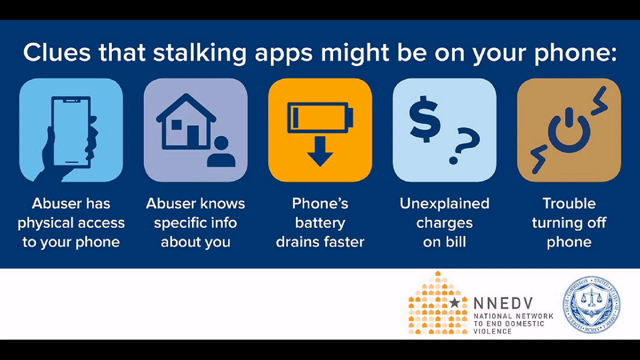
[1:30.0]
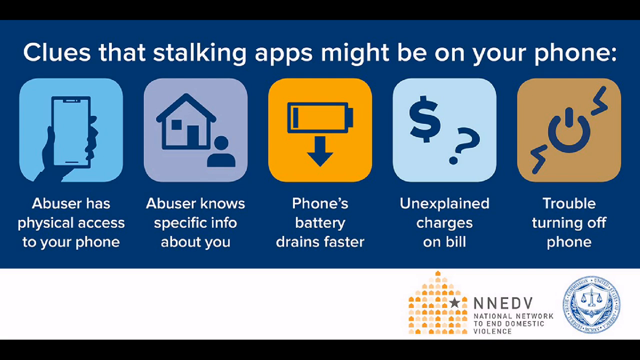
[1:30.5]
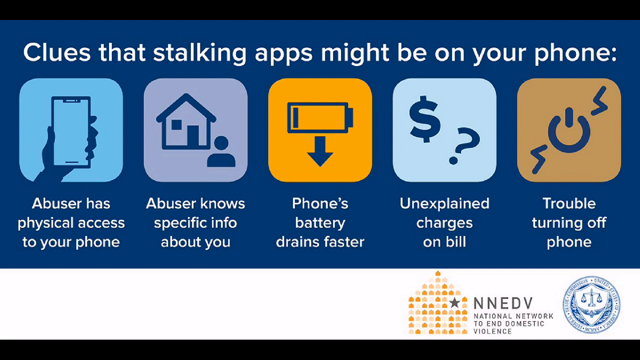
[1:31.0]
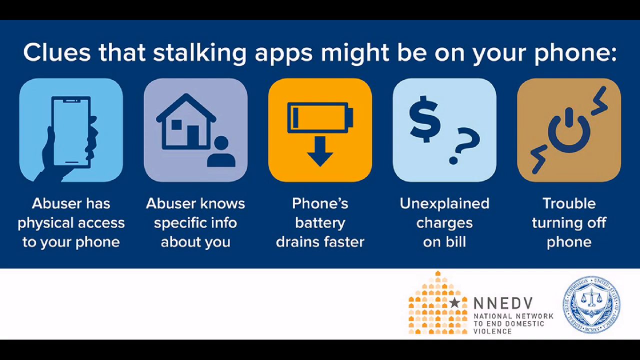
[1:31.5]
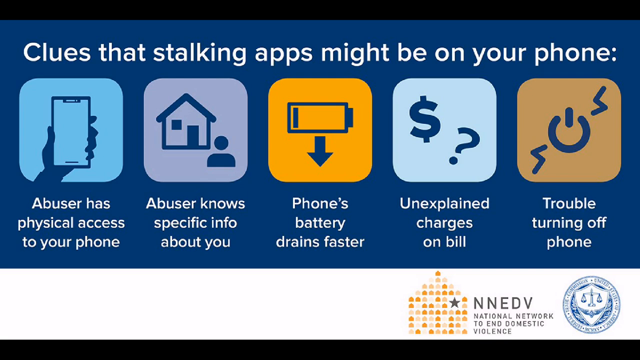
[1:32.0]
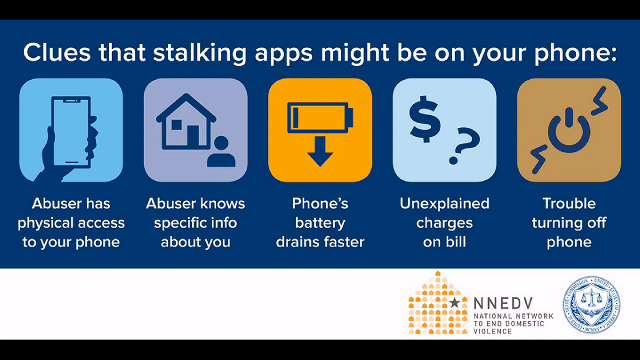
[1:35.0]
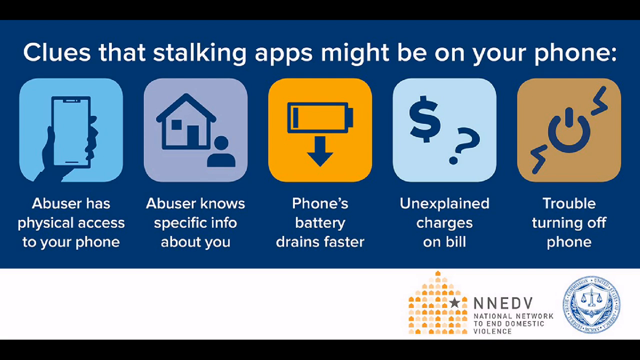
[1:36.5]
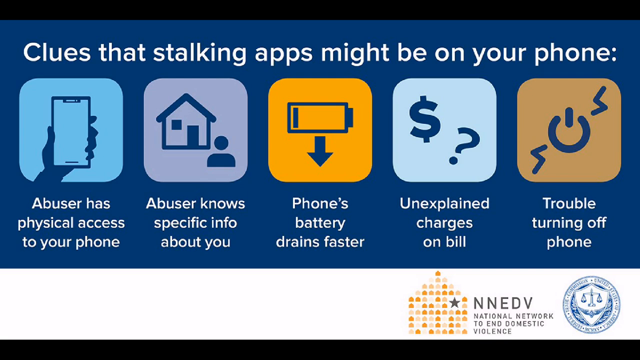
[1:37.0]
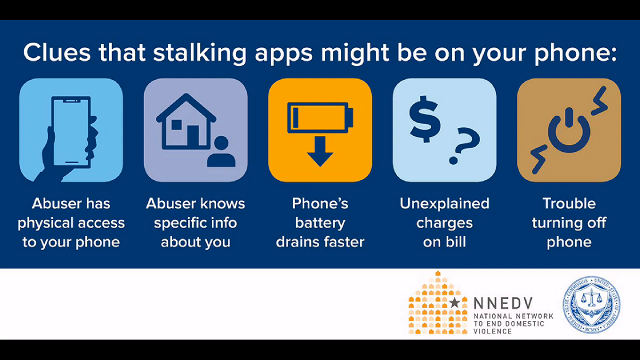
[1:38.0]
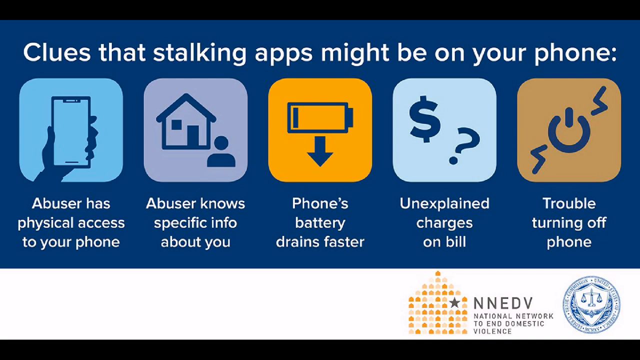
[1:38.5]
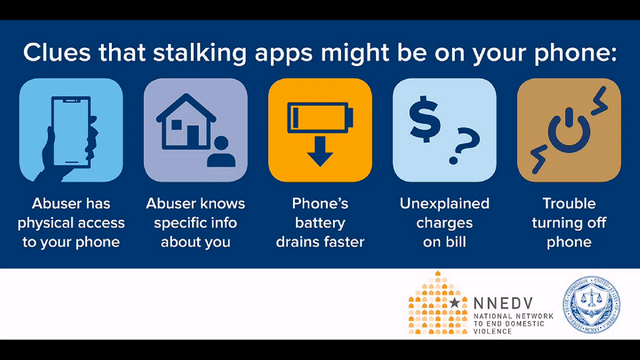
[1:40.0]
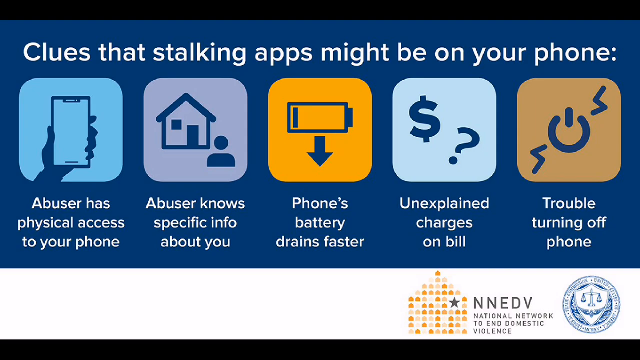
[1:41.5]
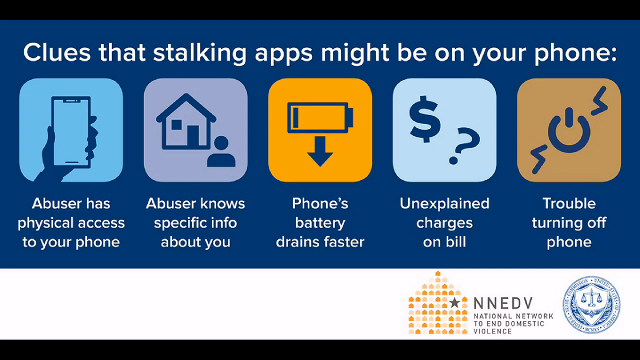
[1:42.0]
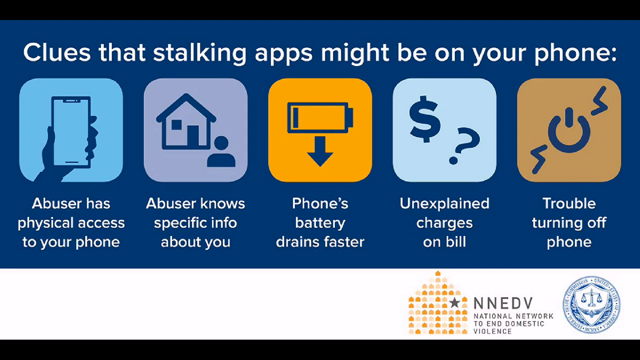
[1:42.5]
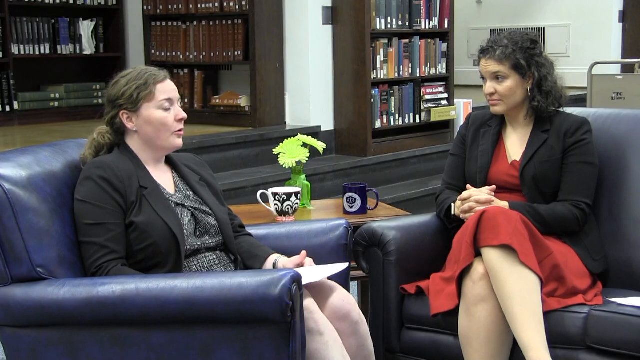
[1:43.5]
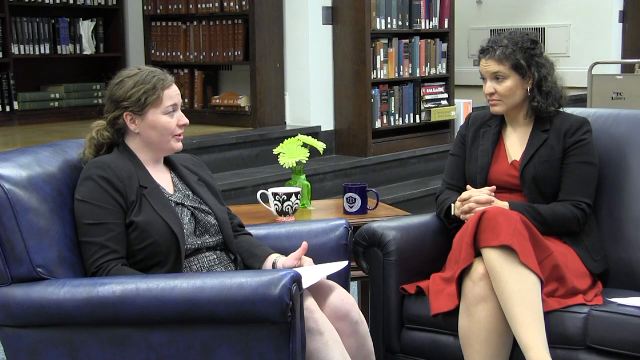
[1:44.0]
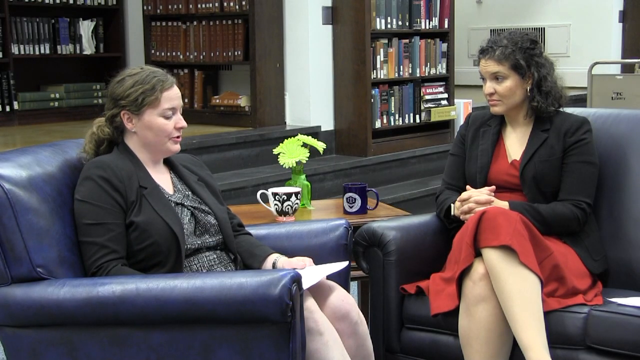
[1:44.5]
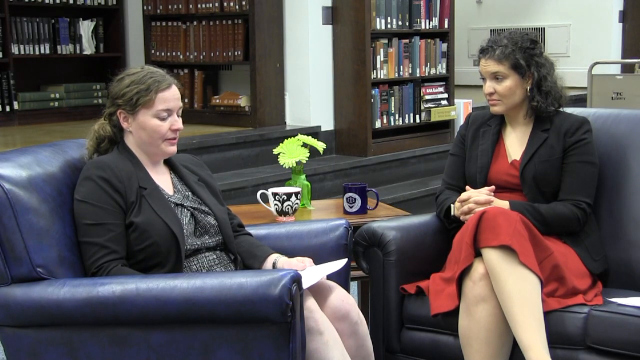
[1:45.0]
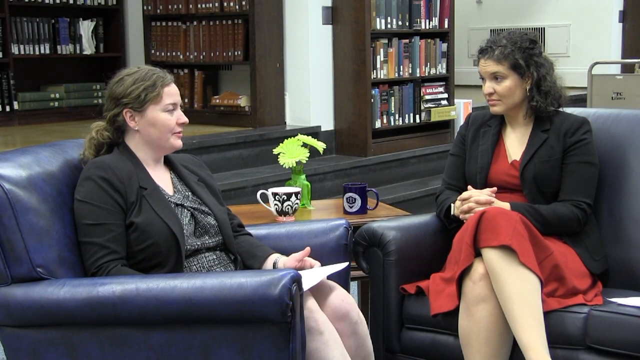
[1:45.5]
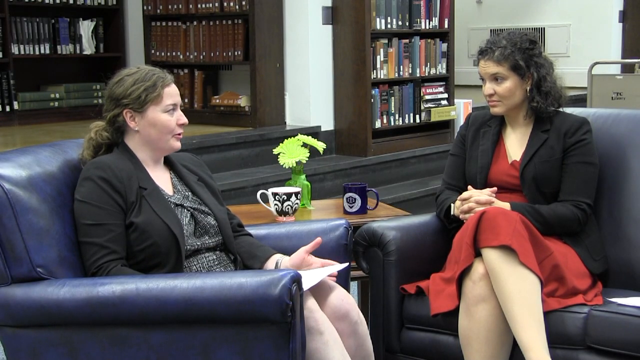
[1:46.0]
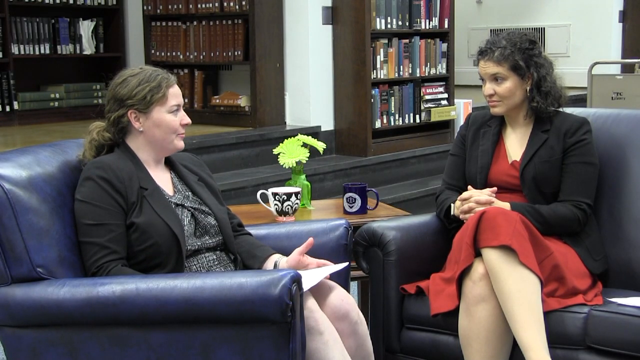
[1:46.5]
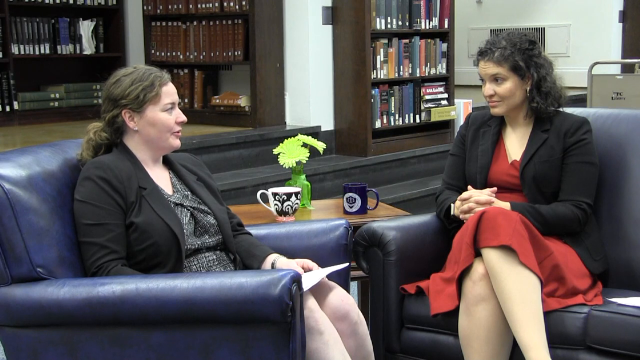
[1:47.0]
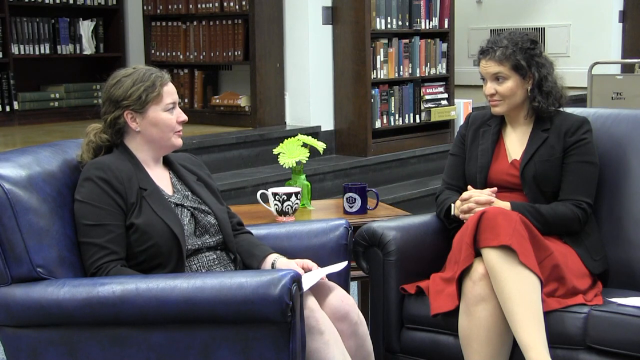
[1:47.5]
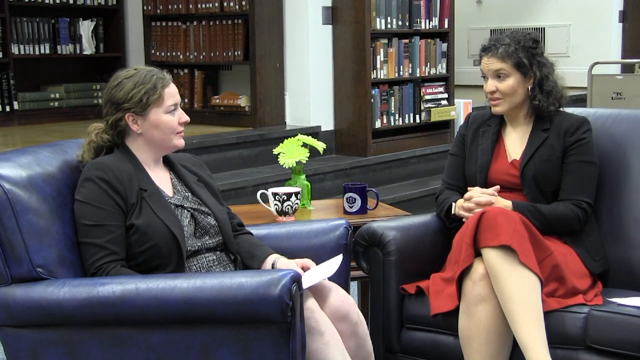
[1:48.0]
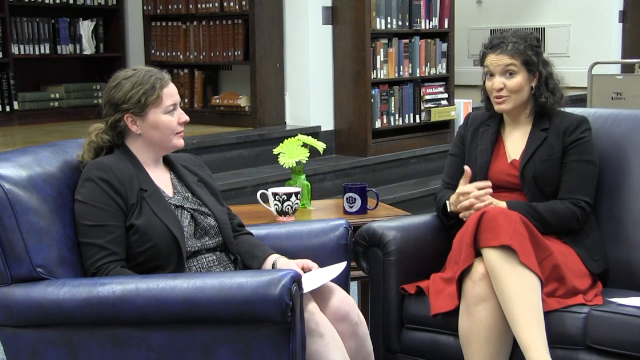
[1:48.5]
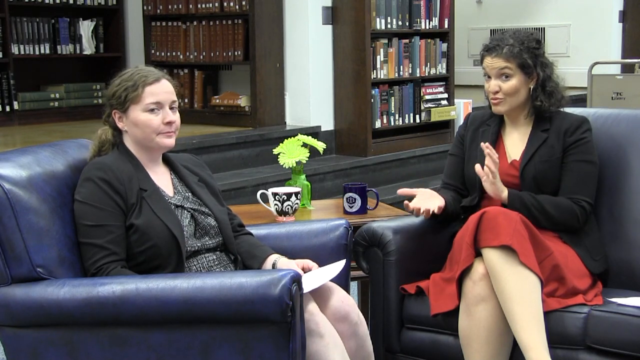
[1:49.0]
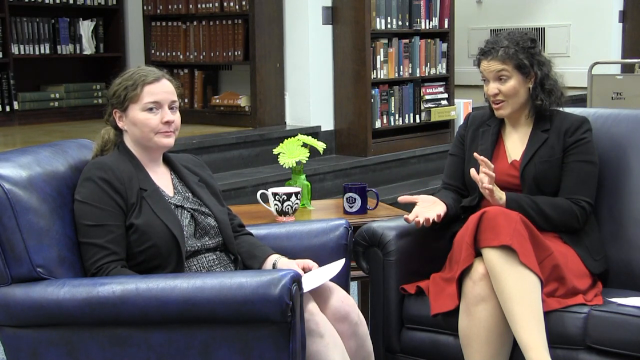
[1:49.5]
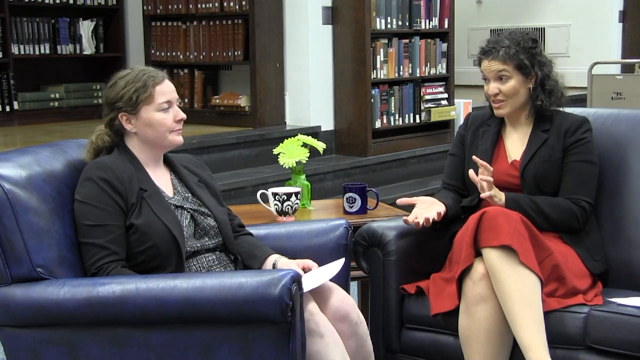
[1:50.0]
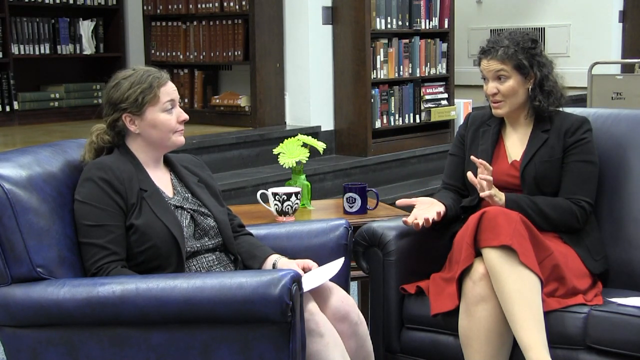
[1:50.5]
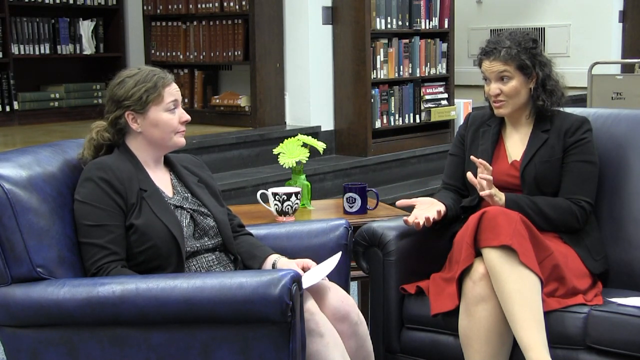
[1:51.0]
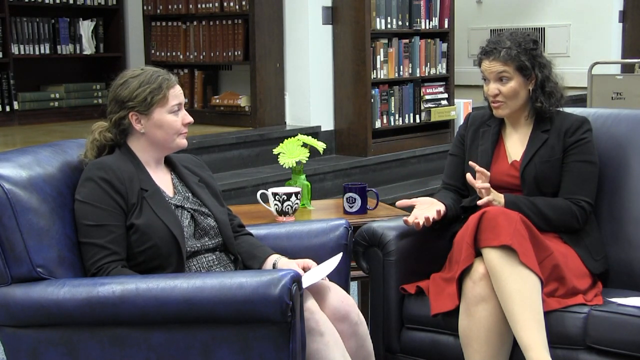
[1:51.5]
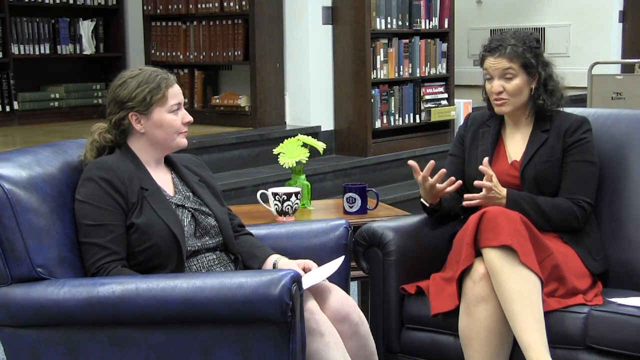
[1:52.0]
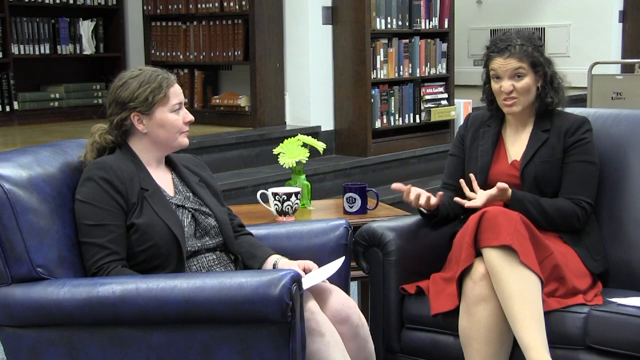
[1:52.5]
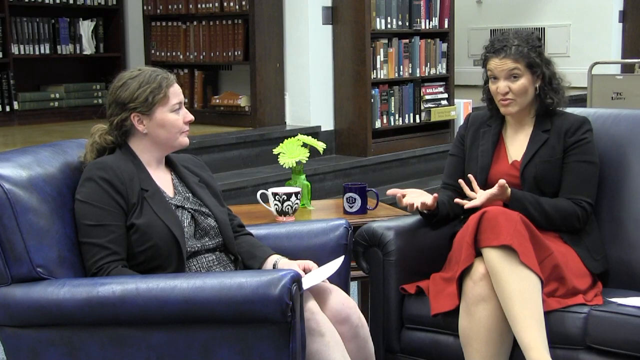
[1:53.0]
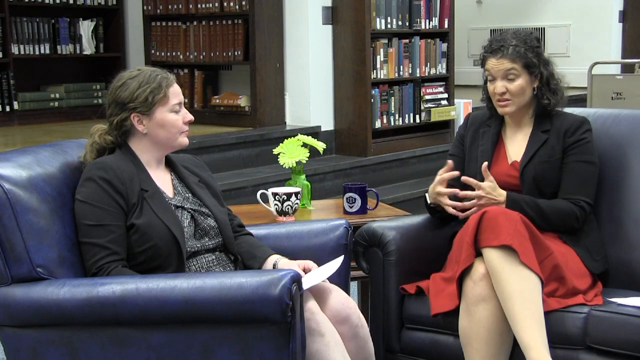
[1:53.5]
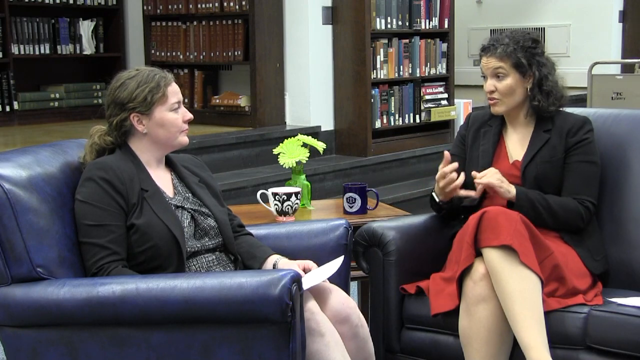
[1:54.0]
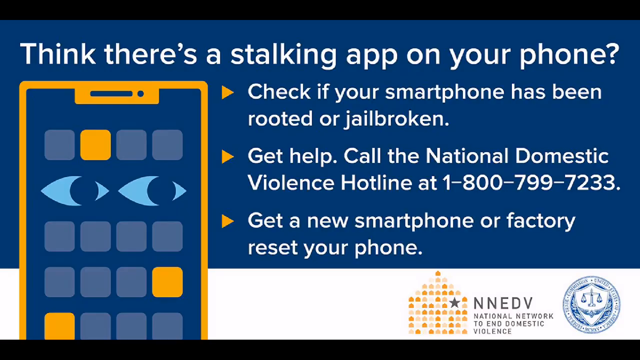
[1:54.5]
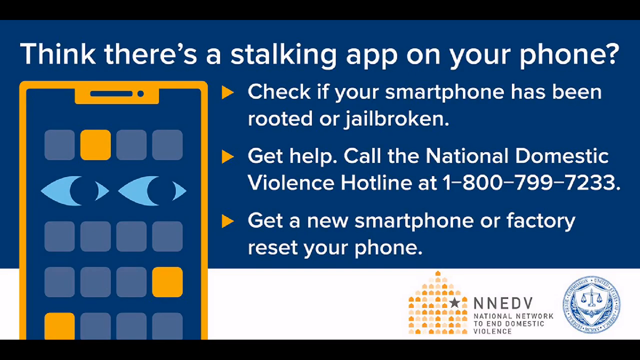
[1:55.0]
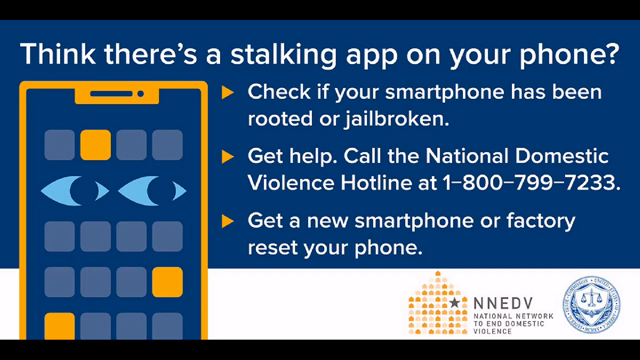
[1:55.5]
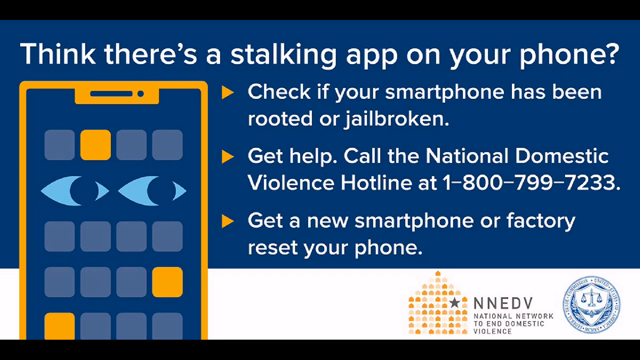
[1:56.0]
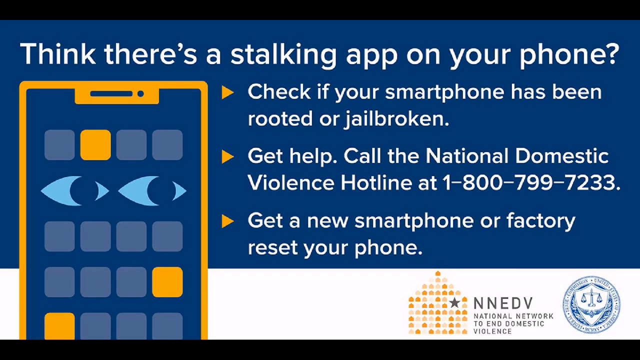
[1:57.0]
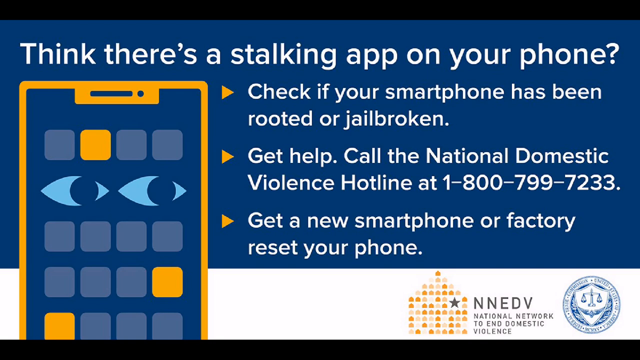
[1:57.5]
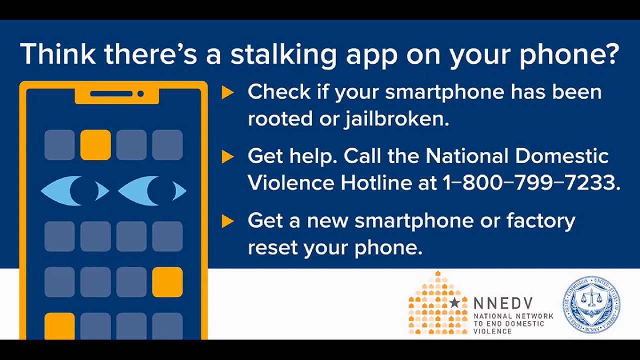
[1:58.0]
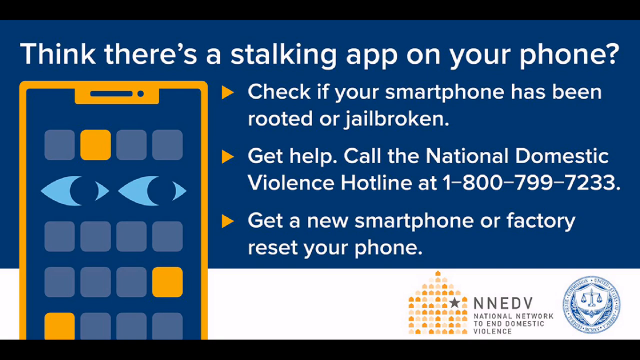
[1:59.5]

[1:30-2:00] The clues about the phone continue, illustrated with images of a hand holding a phone, a person with a house, a battery draining low, and a money sign with a question mark. The information is credited to the National Network to End Domestic Violence (NNEDV), with seals at the bottom of the screen. The women are shown conversing again, still sitting in their chairs. Another item mentions checking whether the phone has been jailbroken.